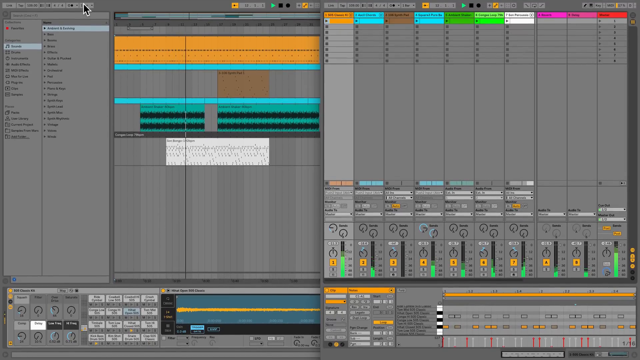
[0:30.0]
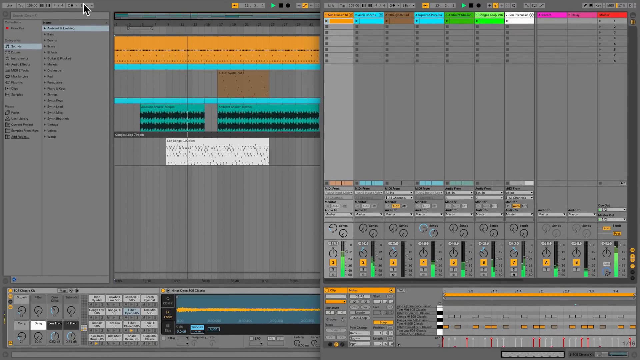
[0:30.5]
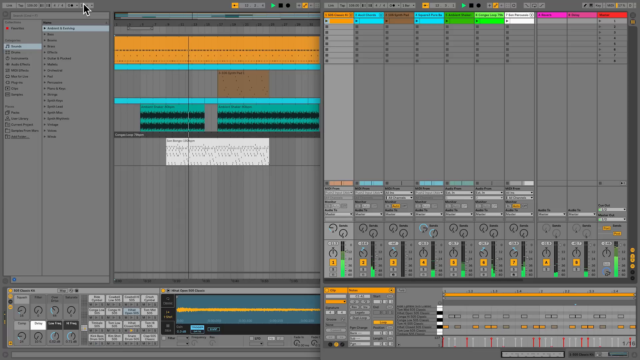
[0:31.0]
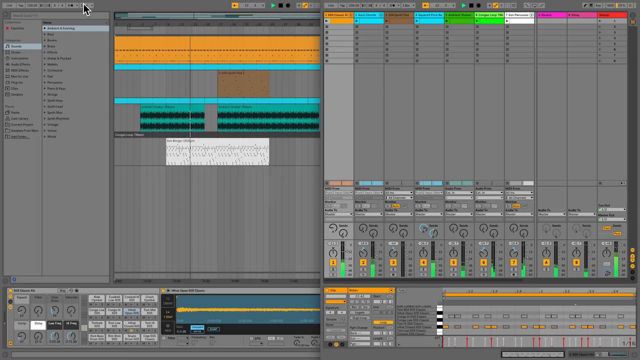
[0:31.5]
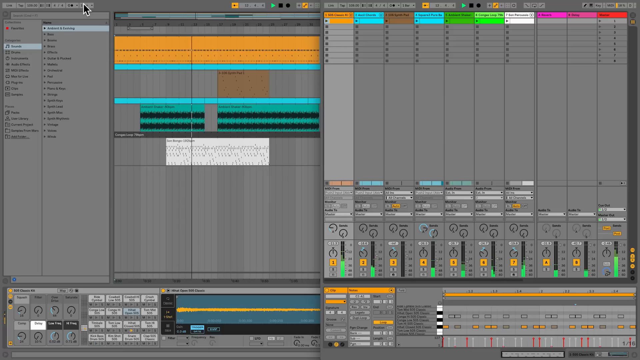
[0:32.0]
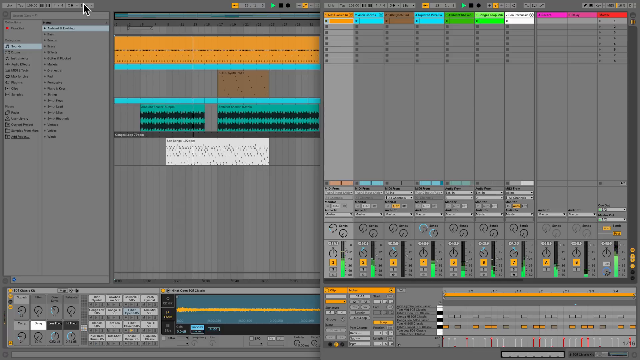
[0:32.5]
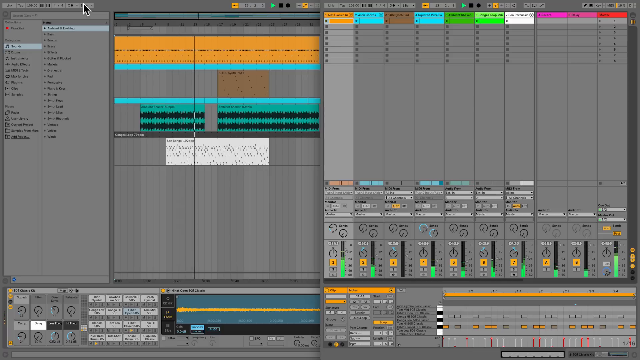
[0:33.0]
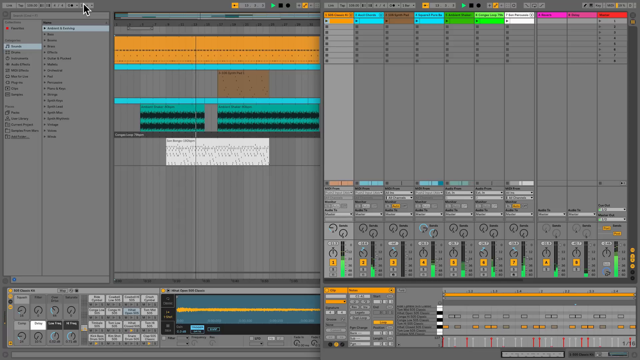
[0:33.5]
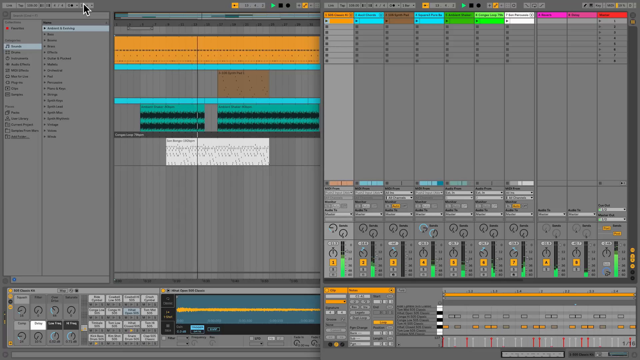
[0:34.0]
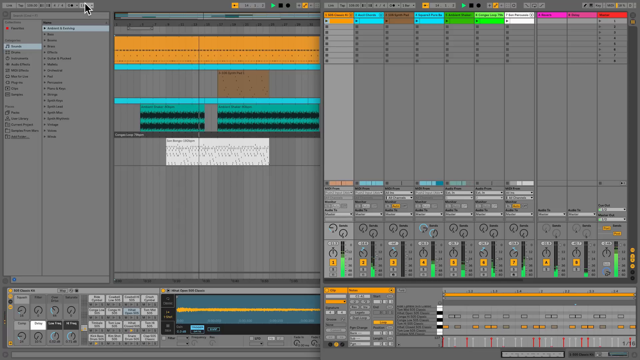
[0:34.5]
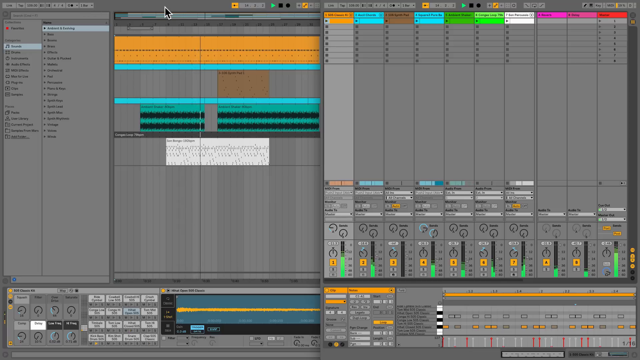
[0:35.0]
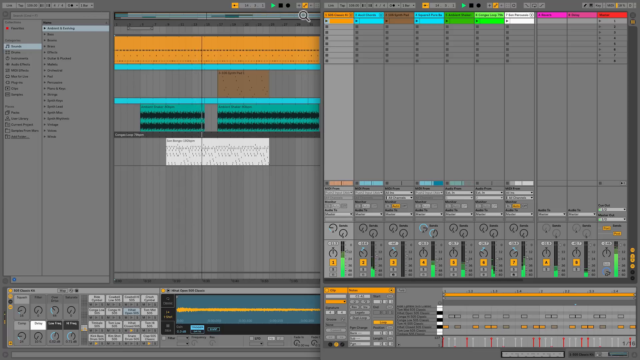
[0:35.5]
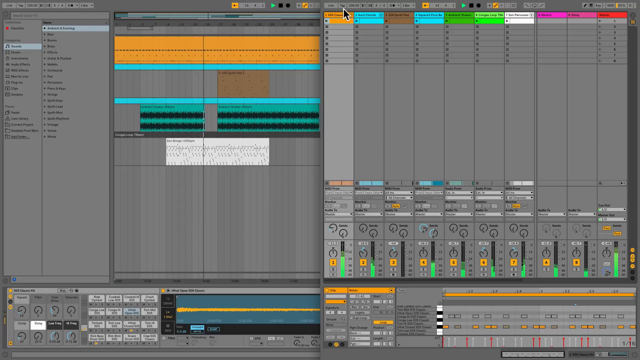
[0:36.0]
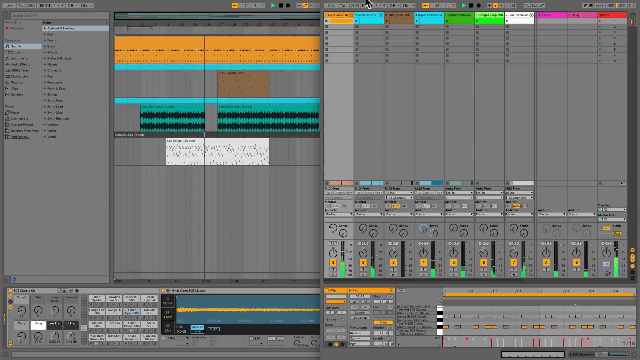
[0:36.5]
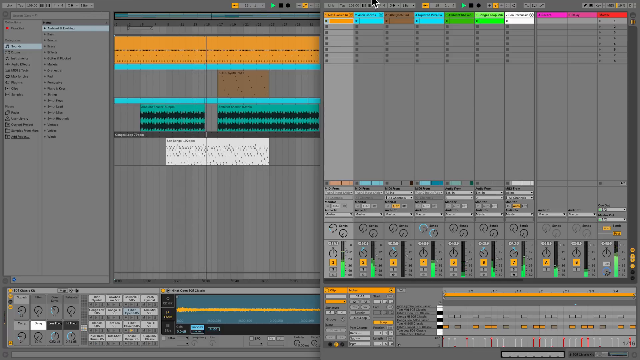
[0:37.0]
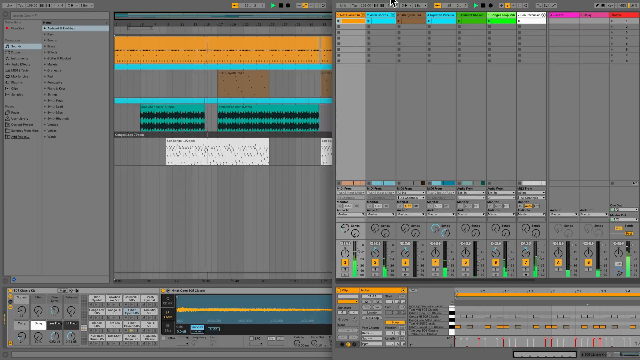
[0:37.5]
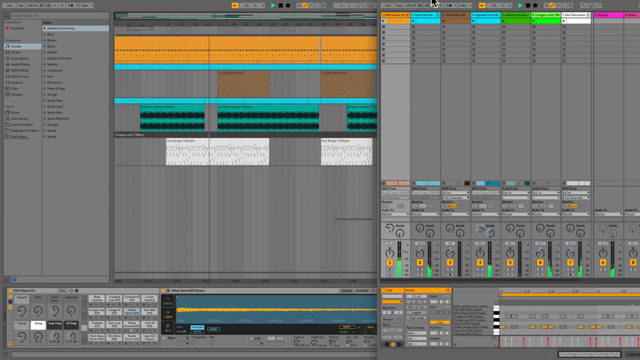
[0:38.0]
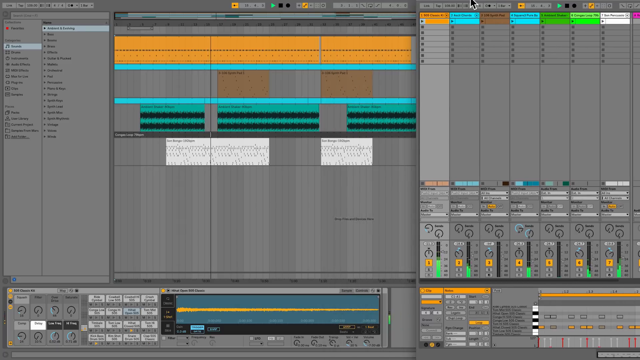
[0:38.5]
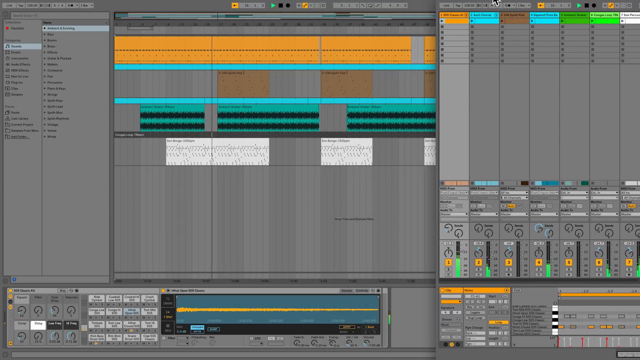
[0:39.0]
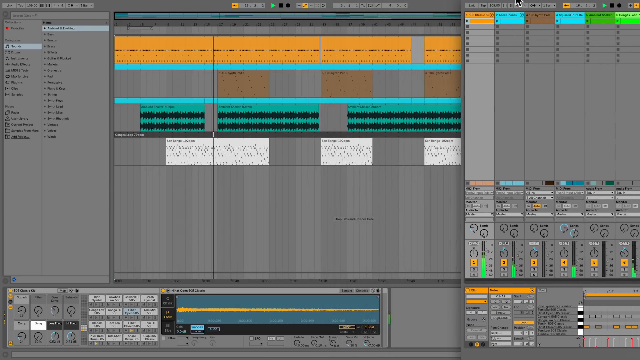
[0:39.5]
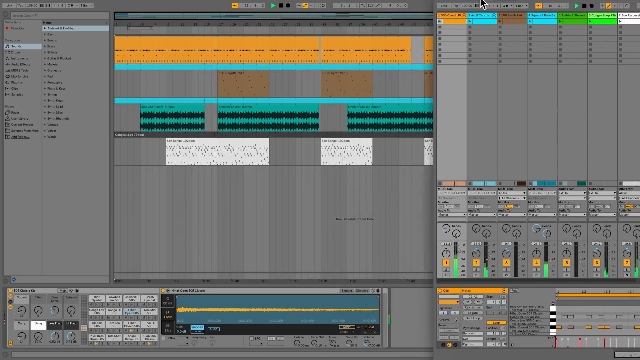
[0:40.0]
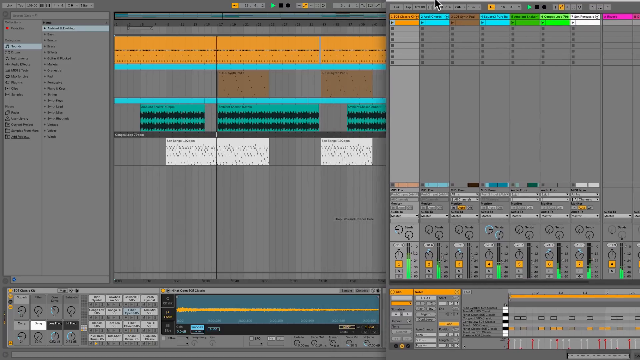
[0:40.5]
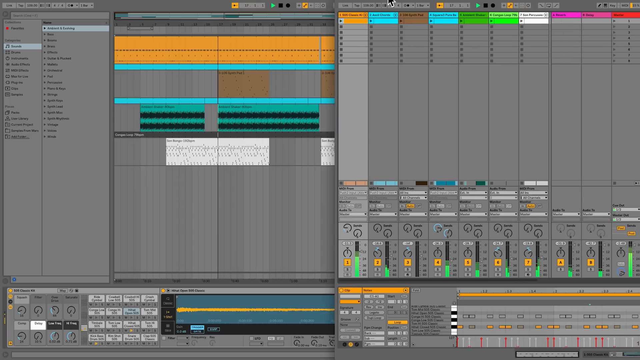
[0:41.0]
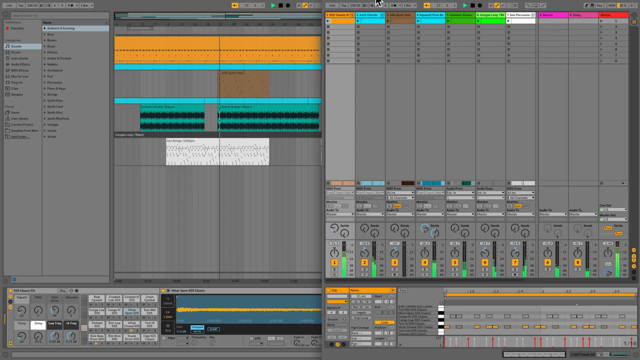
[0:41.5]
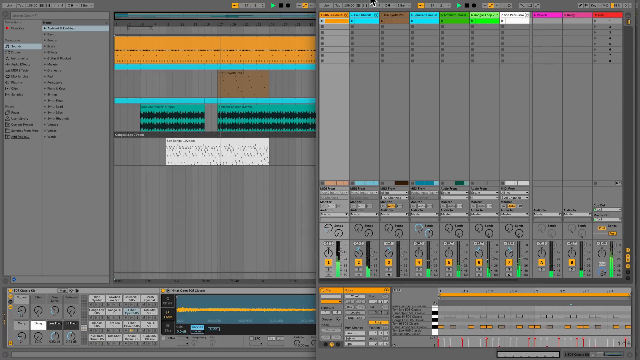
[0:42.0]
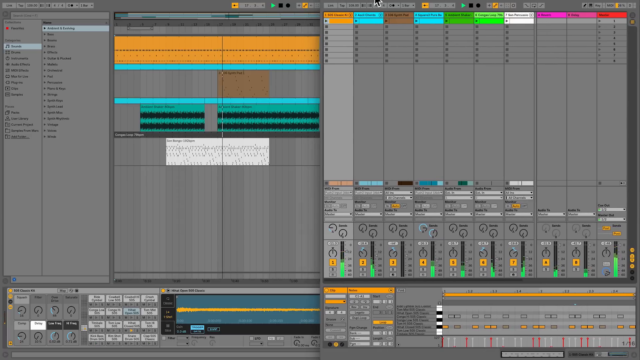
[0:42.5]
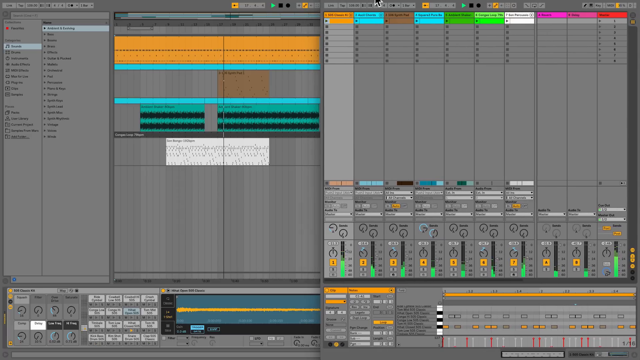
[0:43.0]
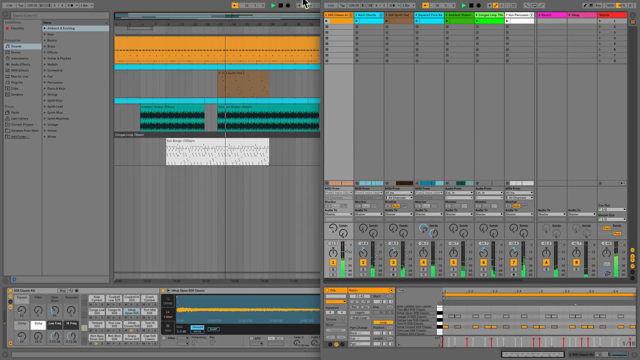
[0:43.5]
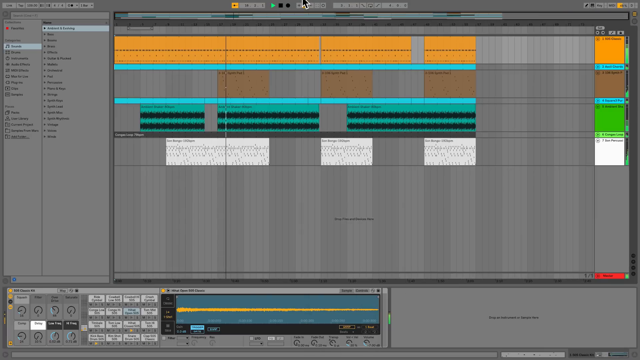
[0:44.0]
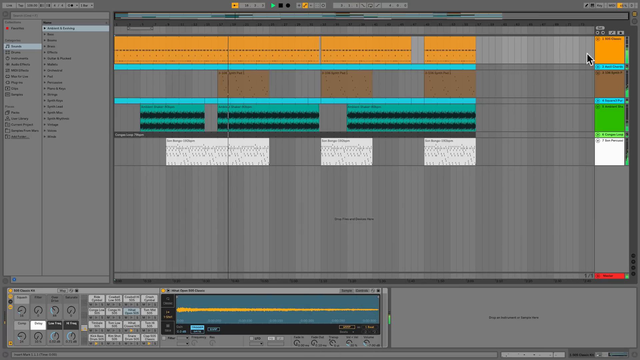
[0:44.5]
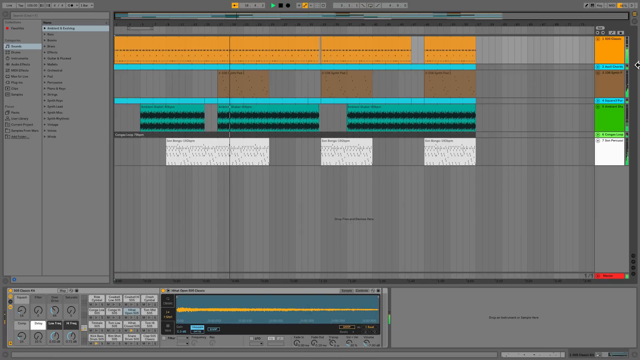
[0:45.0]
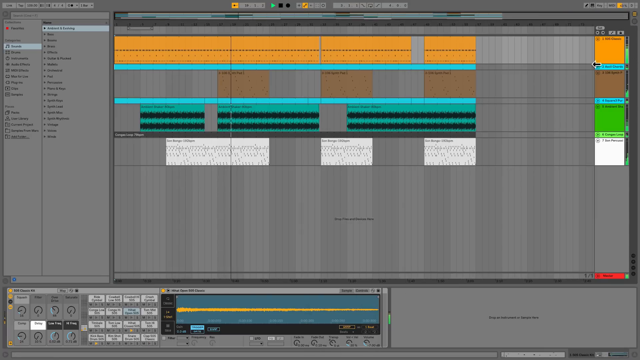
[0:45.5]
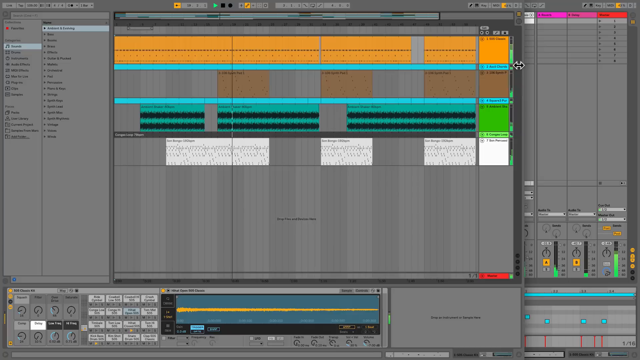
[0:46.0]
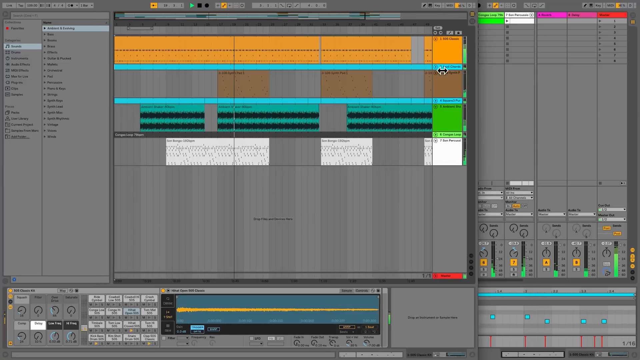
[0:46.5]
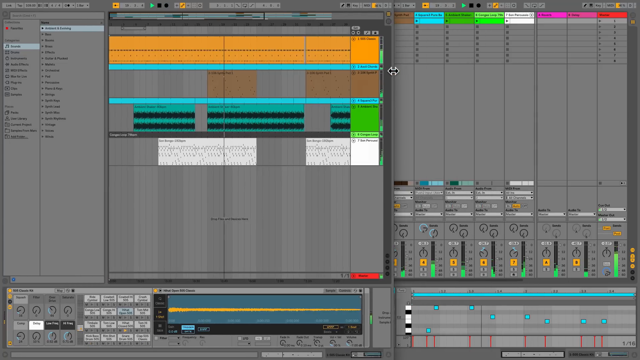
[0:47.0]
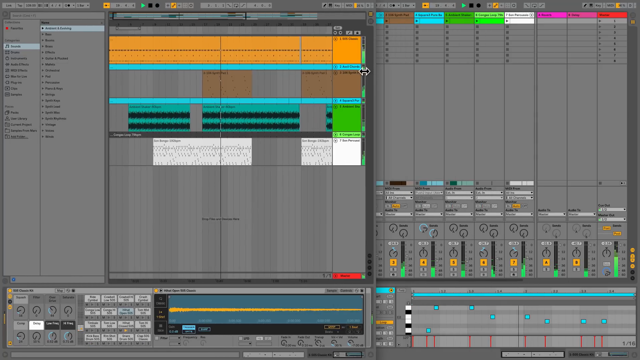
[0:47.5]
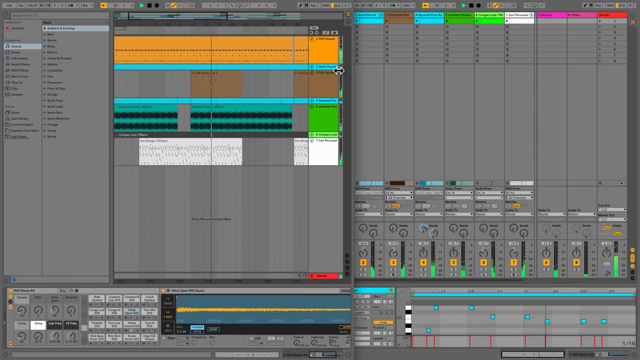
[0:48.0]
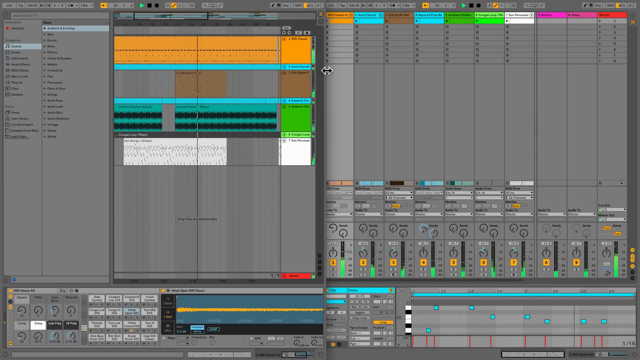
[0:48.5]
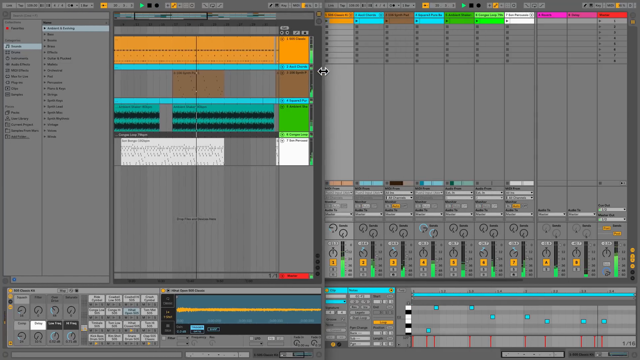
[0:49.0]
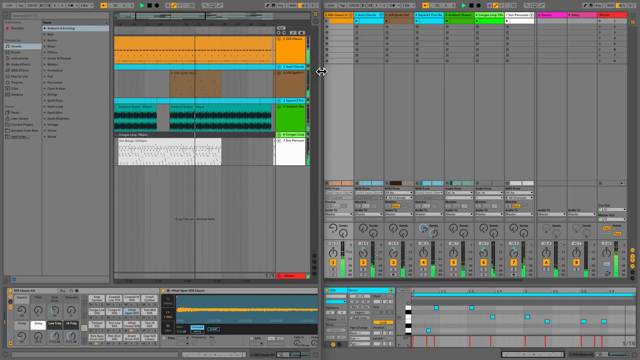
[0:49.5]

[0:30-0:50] A computer screen is shown as a bit of a split screen. The first screen has bars of different colors that run kind of horizontally. The other screen has a more vertical pattern with 10 vertical columns, each with measuring elements at the bottom. The bars move up and down, probably measuring volume, tempo, bass or some other musical characteristic. Then that screen disappears, and an arrow on the screen minimizes the main screen and moves that bar over to the left. On the screen with the vertical musical patterns, each bar measuring the music is a fluorescent green color. To the left of the bar, each column has a yellow box, and above each yellow box there appears to be a shape like a typical power button design.